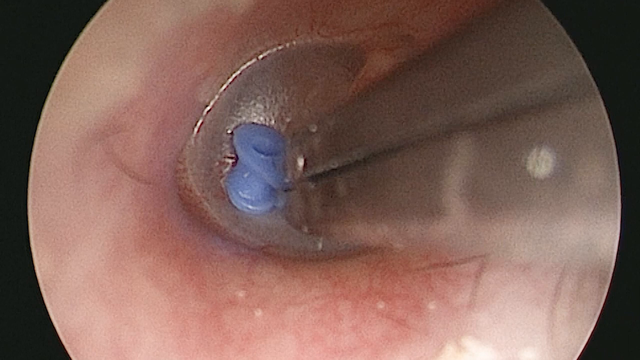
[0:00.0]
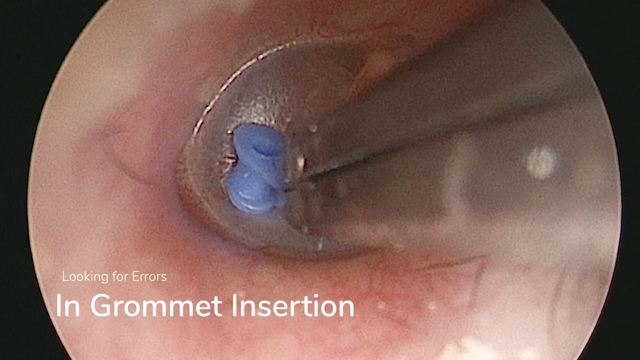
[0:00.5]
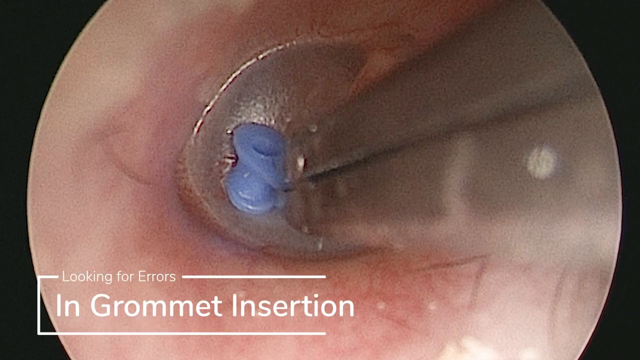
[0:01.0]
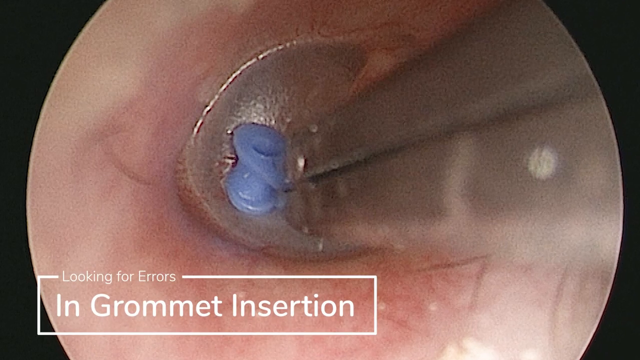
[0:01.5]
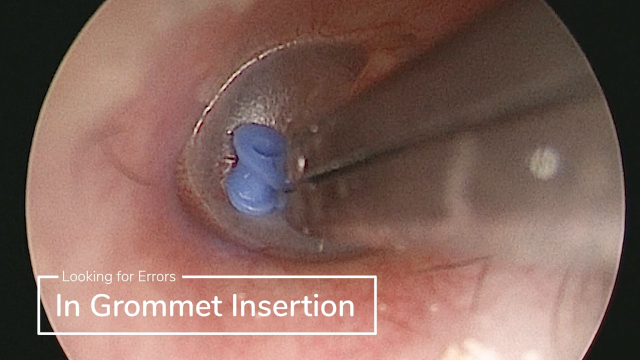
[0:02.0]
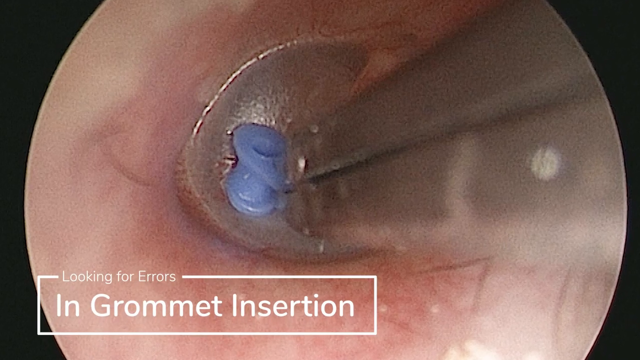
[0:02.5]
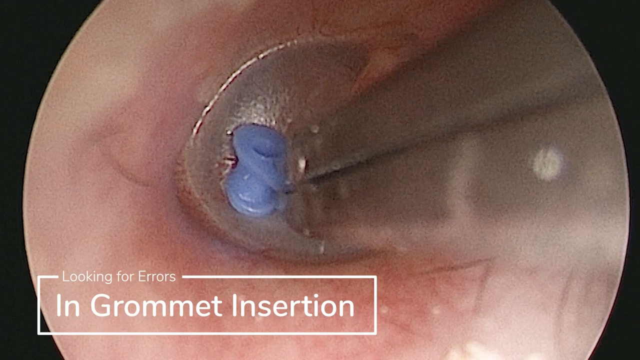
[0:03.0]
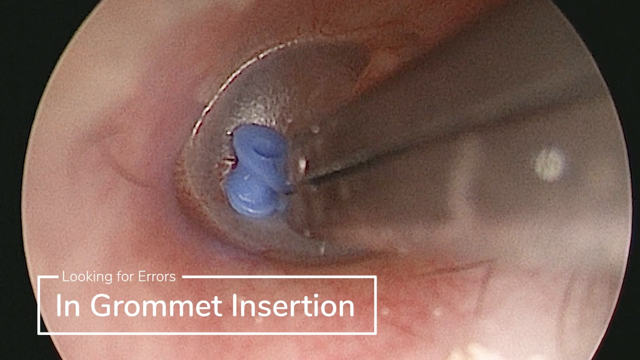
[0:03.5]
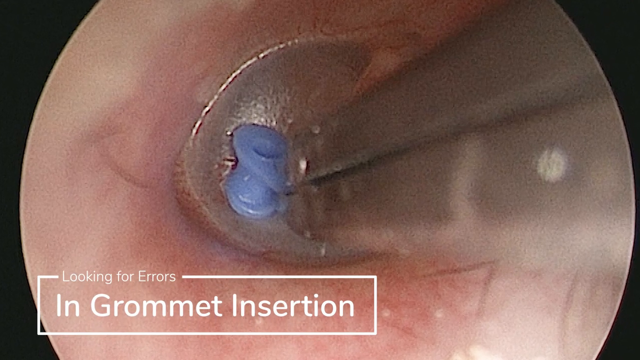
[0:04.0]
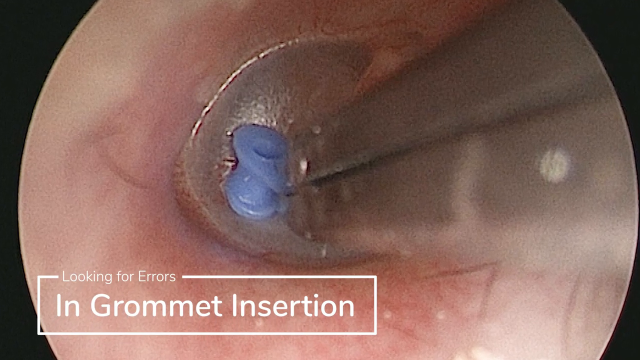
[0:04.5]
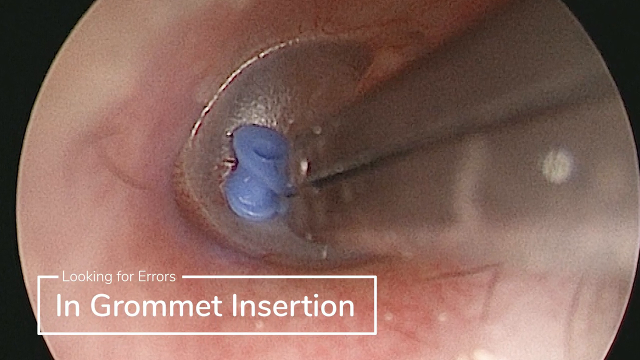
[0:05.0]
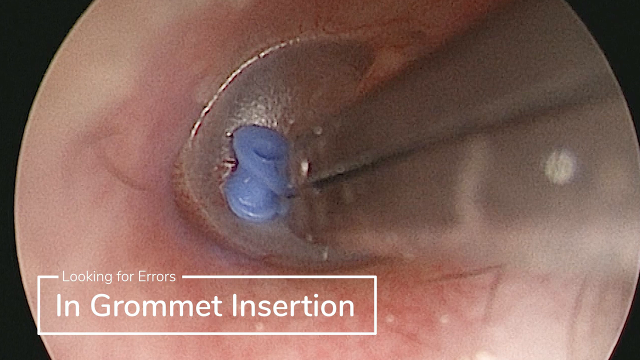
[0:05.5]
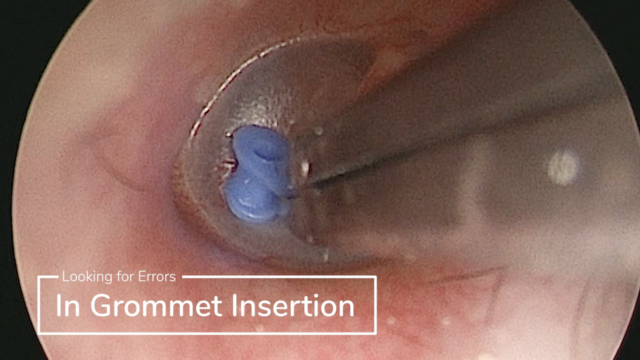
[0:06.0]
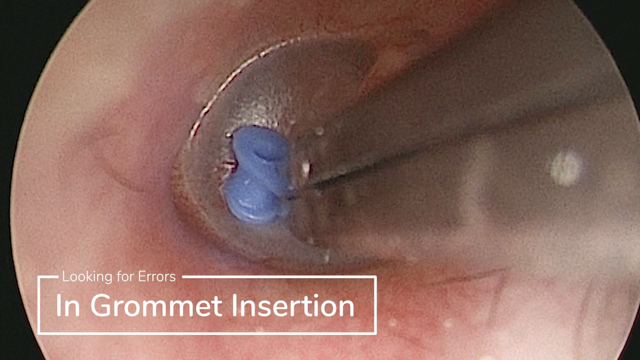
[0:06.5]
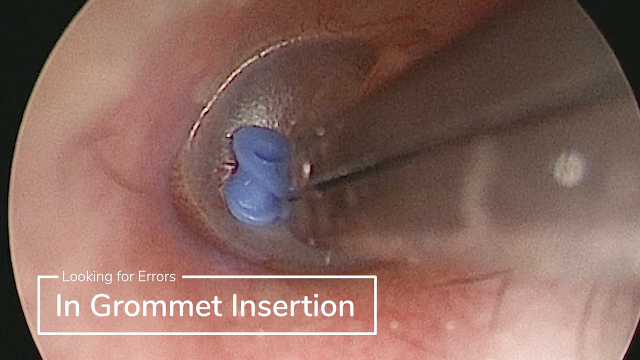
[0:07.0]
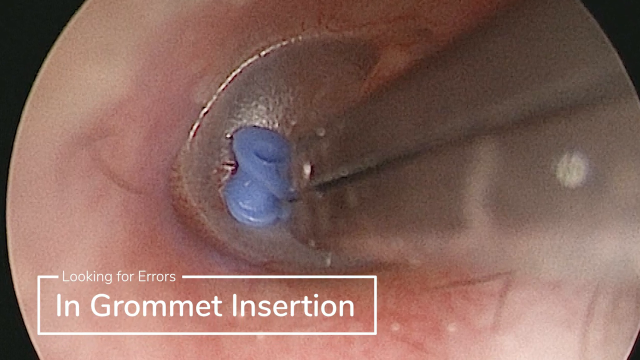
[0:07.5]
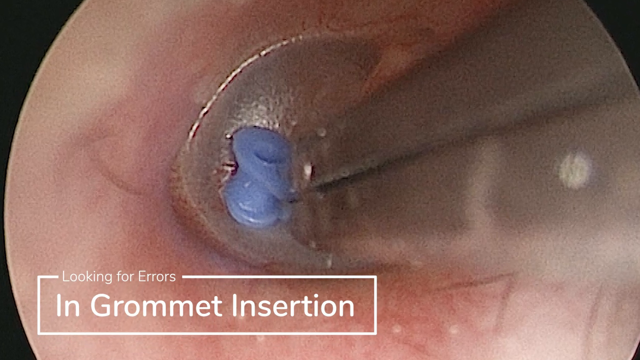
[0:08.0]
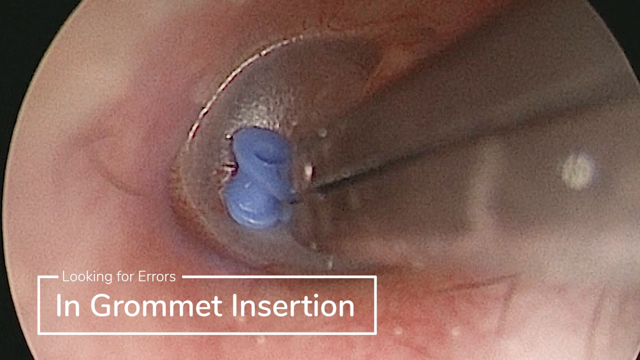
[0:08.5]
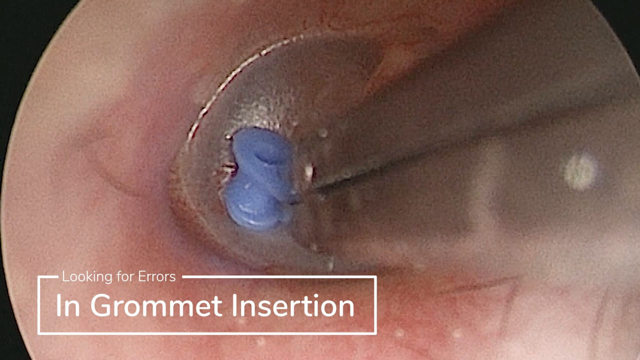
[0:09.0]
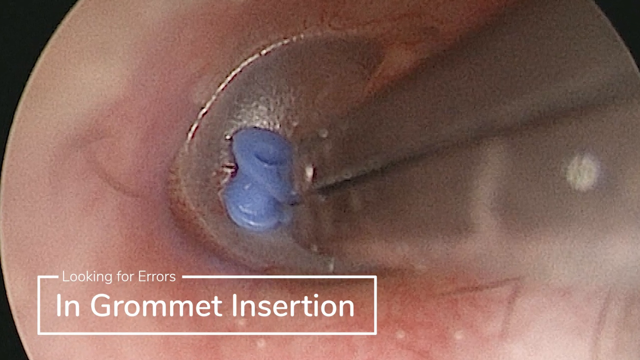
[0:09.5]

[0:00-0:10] On-screen text reads "looking for errors in grommet insertion." The video appears to be a camera view of some sort of cavity in the human body, seen through a camera view that is a perfect circle. A tweezer-like device appears to be holding, and maybe inserting, a little blue piece of something. The camera moves in tighter, and what may be hair and veins are apparently visible. This might be an ear with something being inserted into it.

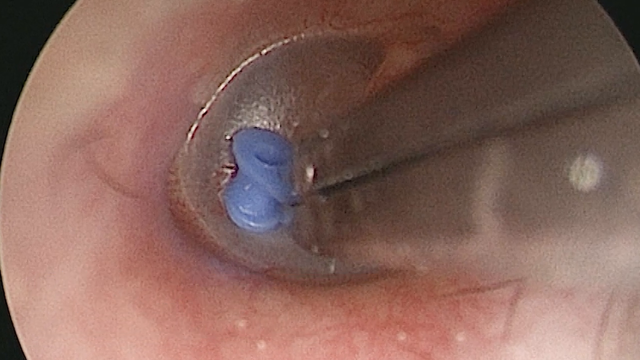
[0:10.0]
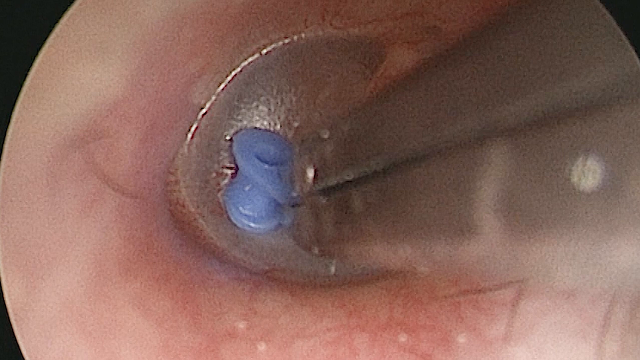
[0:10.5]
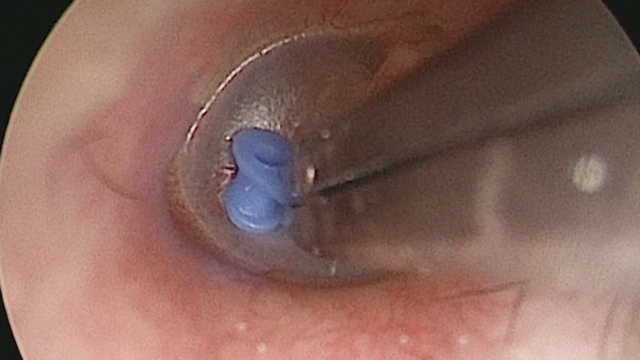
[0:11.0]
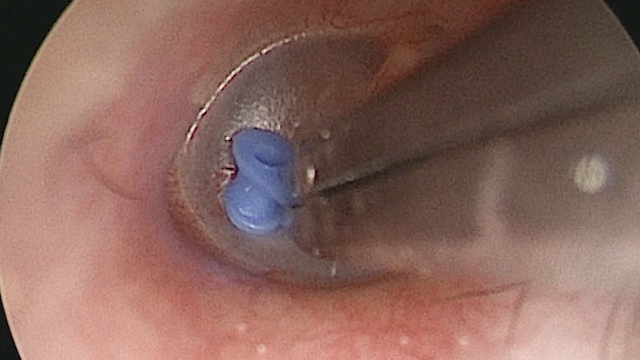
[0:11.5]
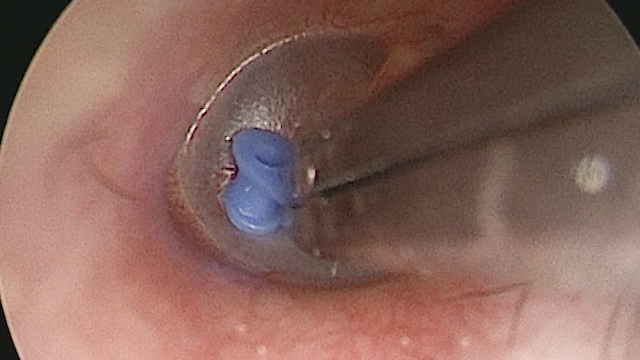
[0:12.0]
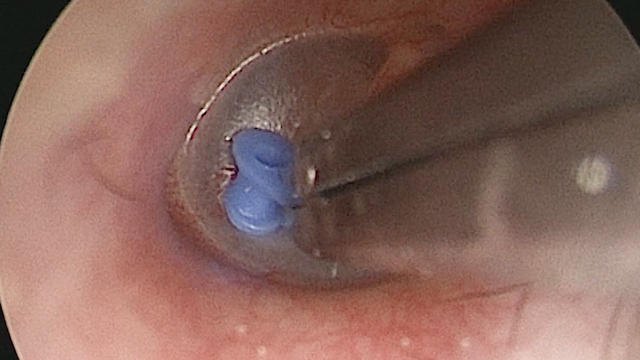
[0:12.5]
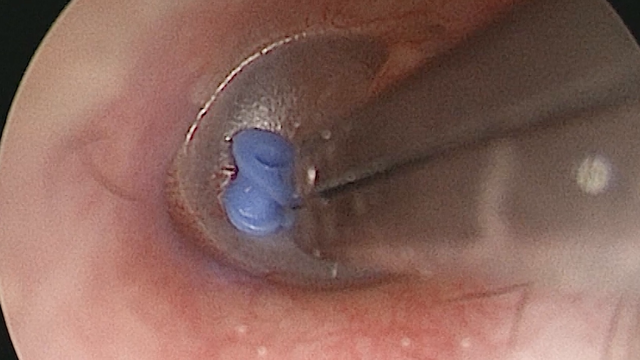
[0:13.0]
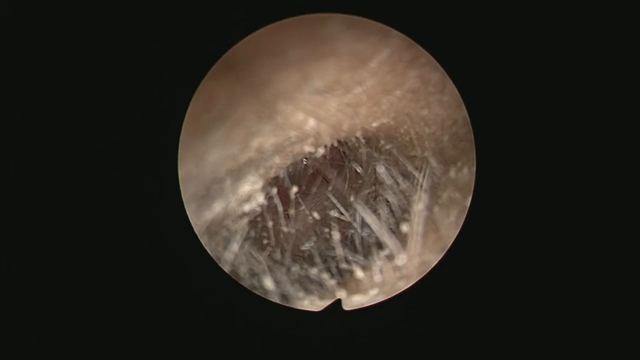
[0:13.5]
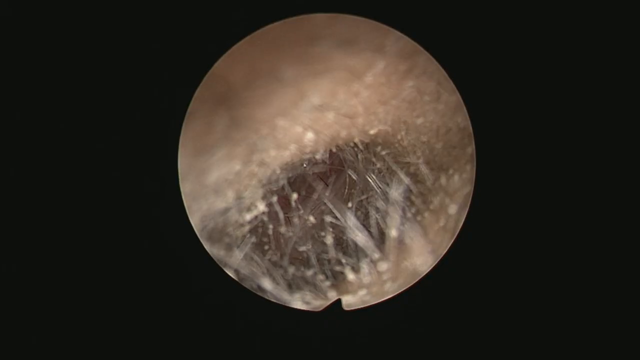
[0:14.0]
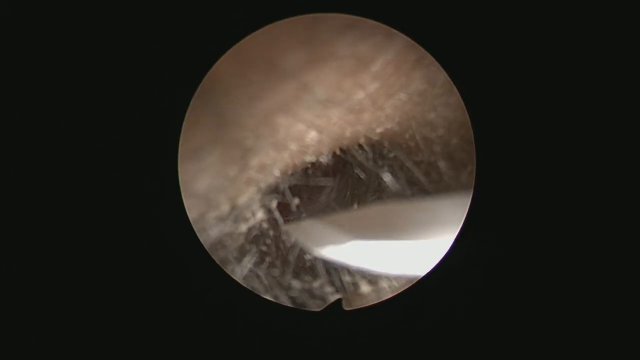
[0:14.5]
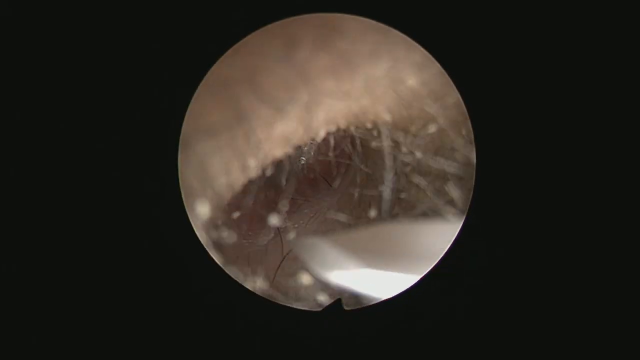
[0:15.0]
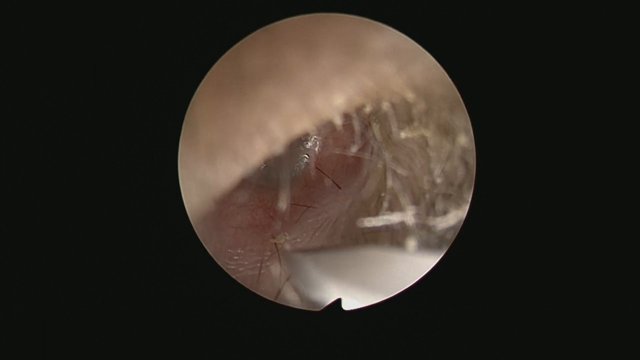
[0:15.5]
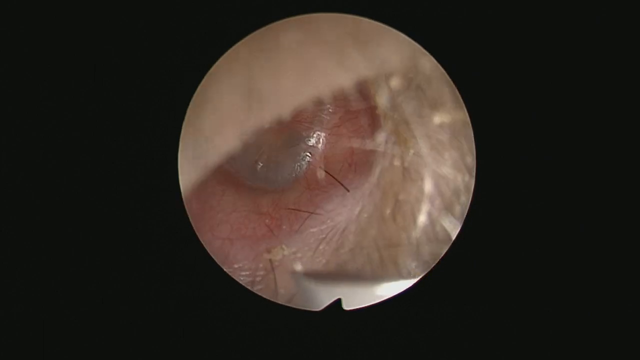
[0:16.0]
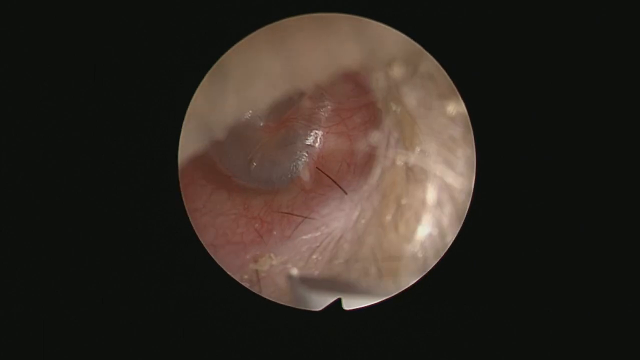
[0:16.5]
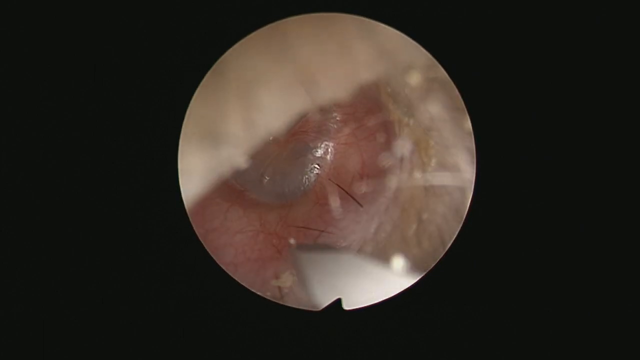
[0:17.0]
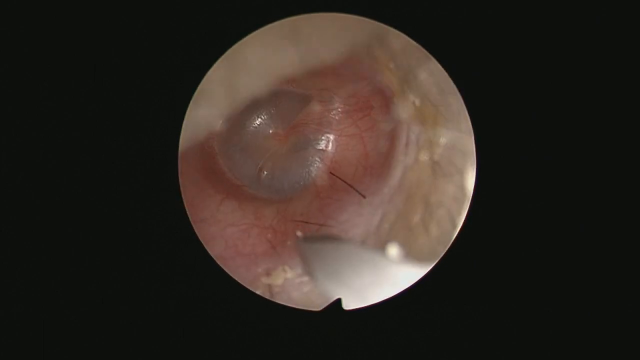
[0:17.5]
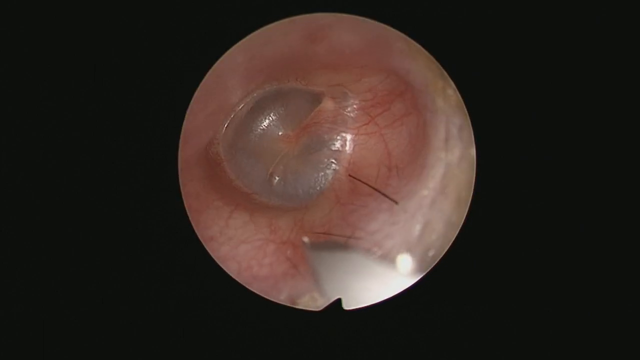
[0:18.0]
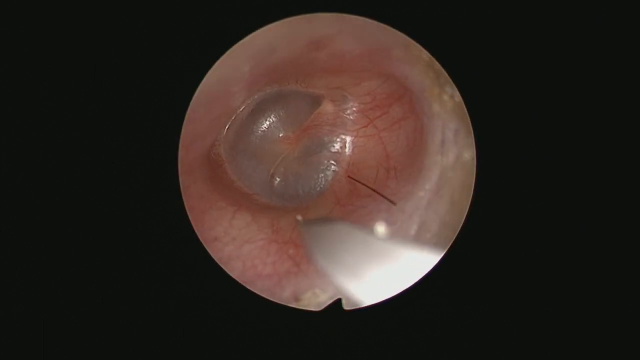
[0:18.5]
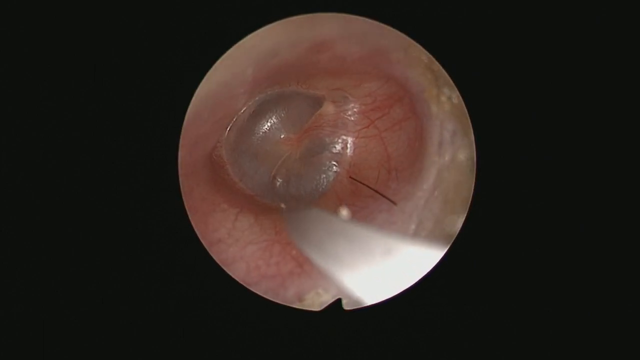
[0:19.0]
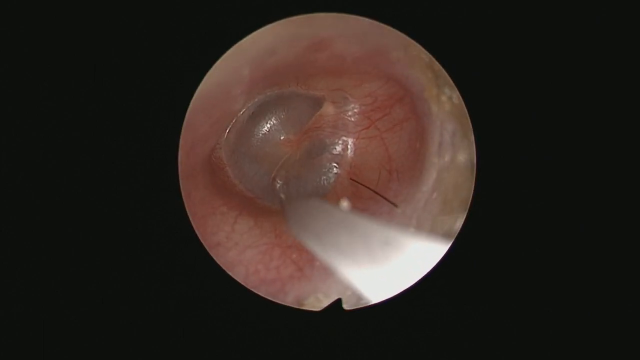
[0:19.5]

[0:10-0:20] An ear is viewed through some sort of tube camera, and the camera view is a perfect circle. A tweezer-like device holds a blue grommet. The camera moves closer, deep into the ear, showing hair, other matter and flesh, perhaps inflamed. A metal tool moves around in the ear canal, going deeper and deeper, and the hair is being moved. A little sack-like material appears that looks like yolk; it is clear but cloudy and seems to have additional flesh attached to it.